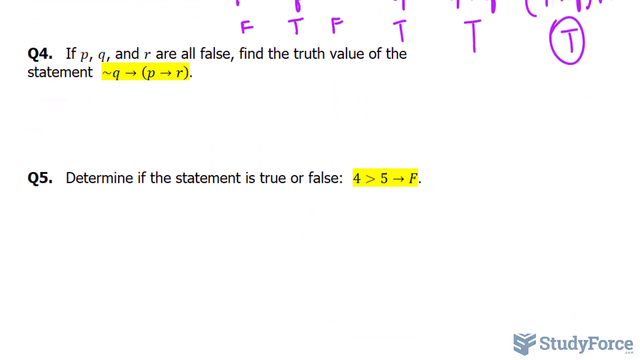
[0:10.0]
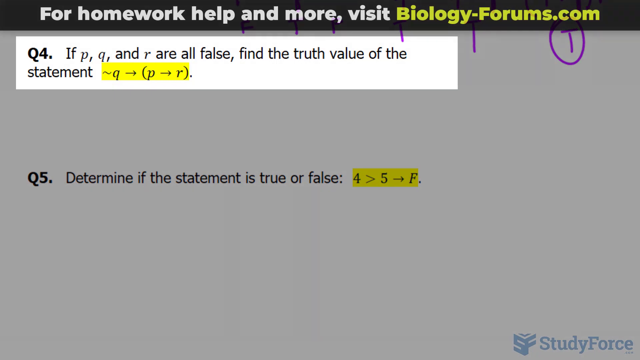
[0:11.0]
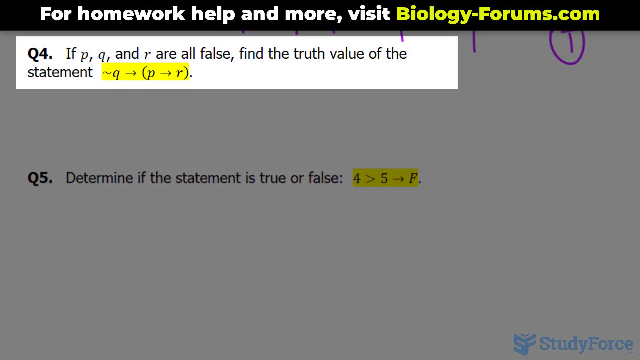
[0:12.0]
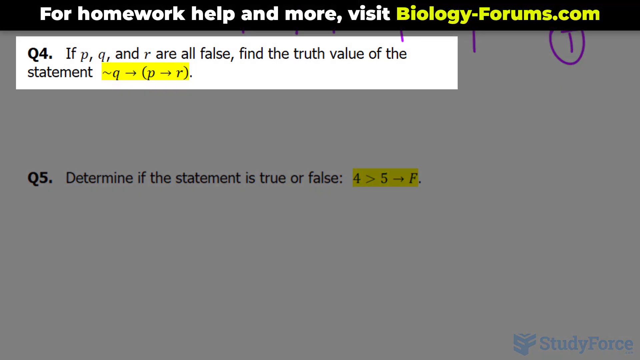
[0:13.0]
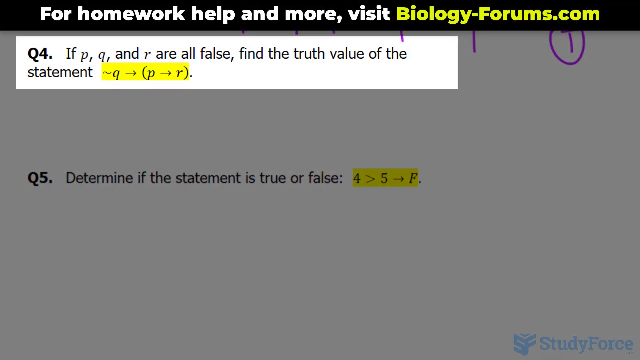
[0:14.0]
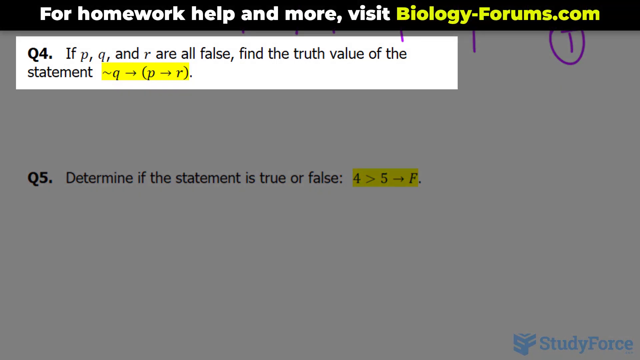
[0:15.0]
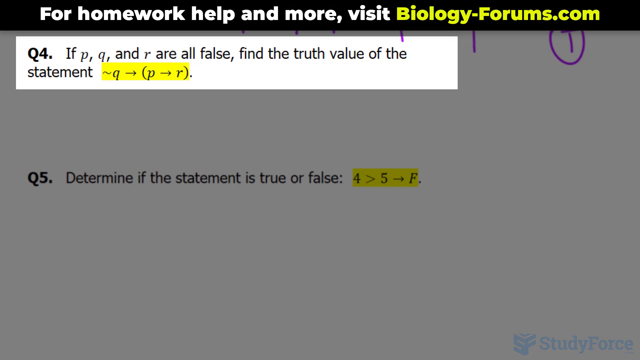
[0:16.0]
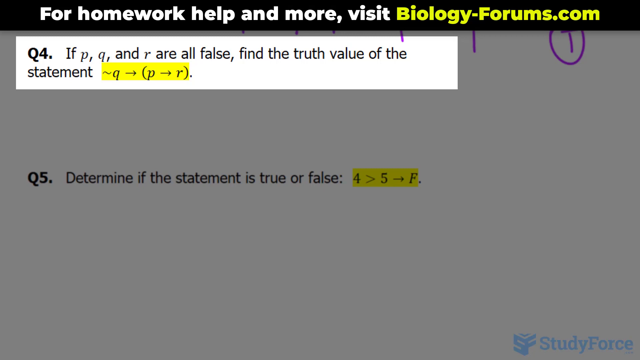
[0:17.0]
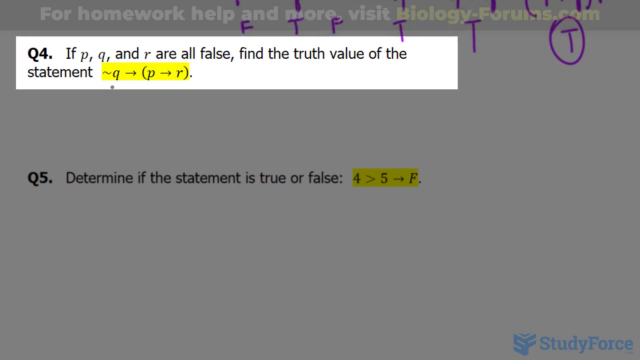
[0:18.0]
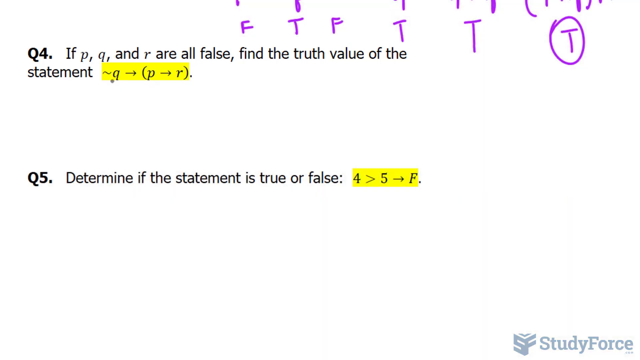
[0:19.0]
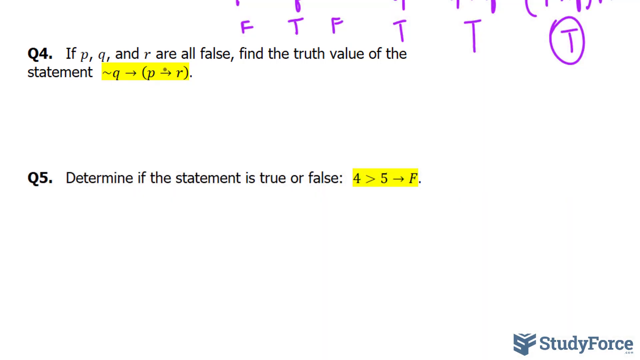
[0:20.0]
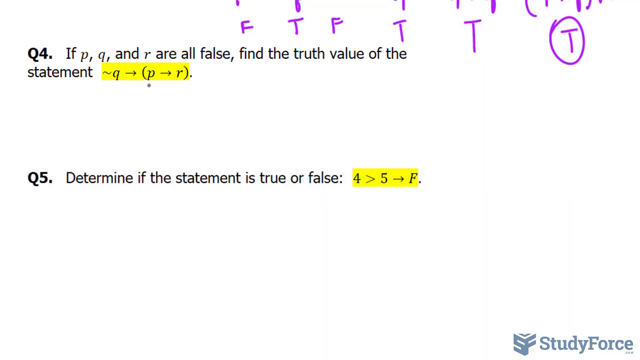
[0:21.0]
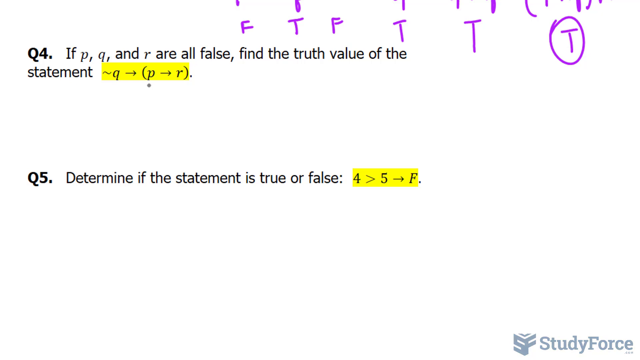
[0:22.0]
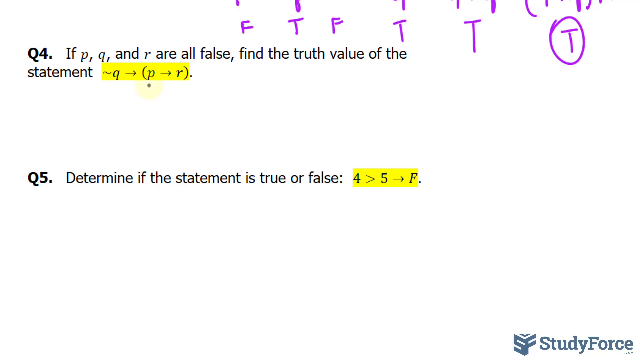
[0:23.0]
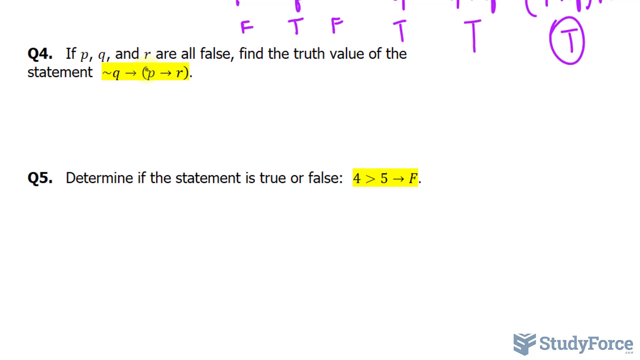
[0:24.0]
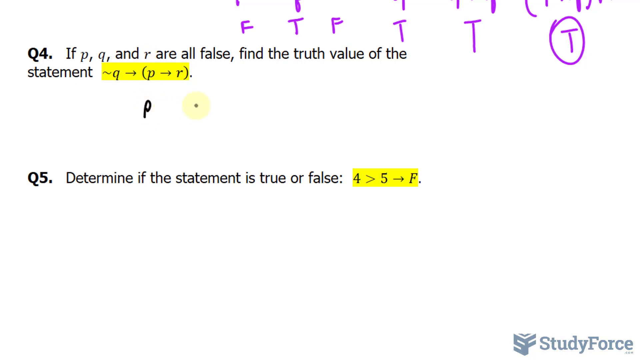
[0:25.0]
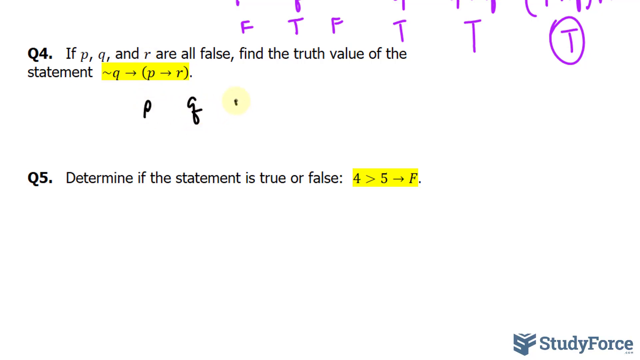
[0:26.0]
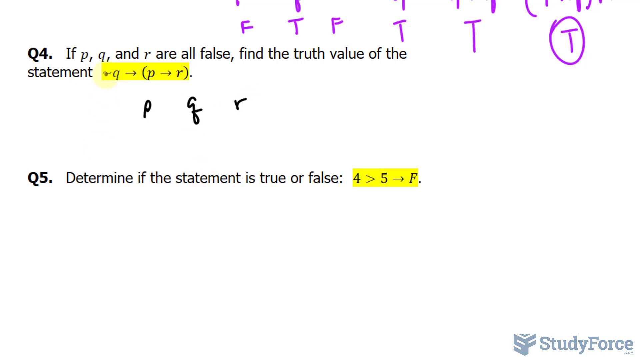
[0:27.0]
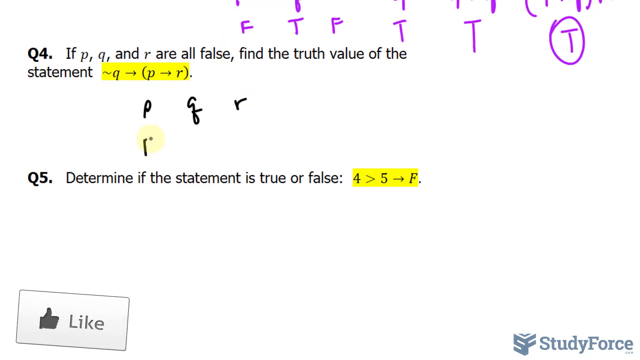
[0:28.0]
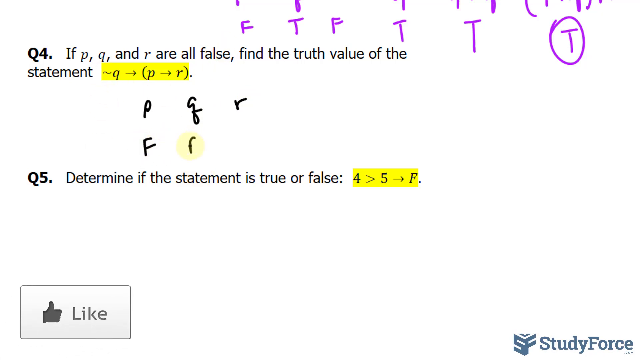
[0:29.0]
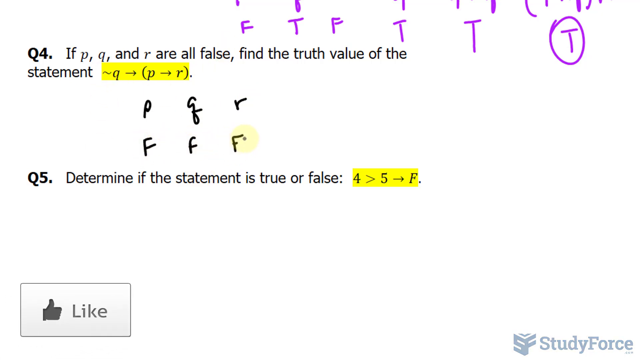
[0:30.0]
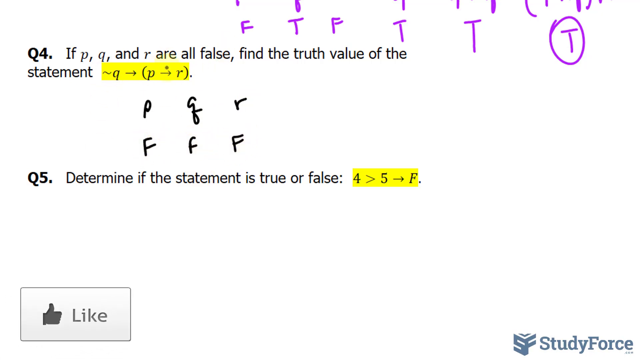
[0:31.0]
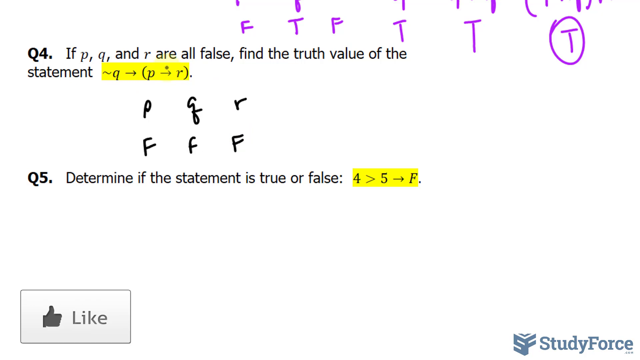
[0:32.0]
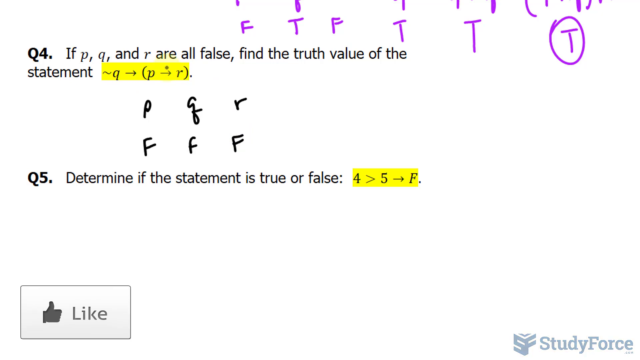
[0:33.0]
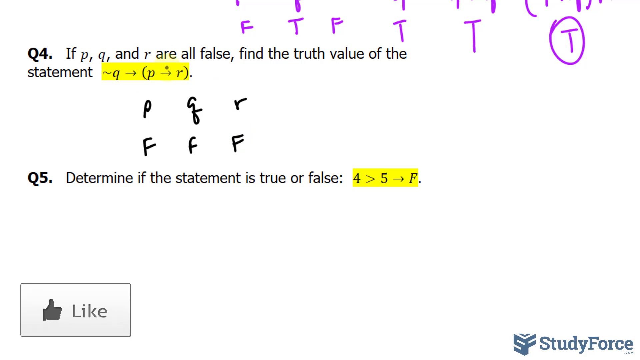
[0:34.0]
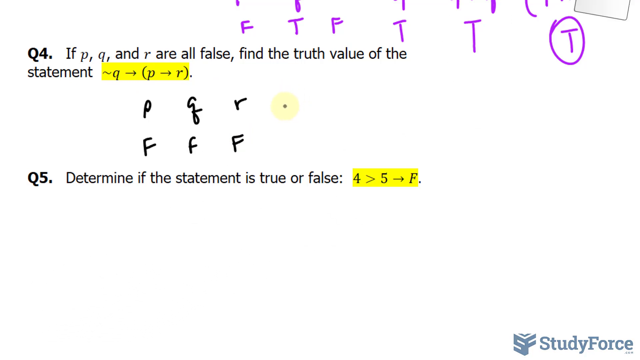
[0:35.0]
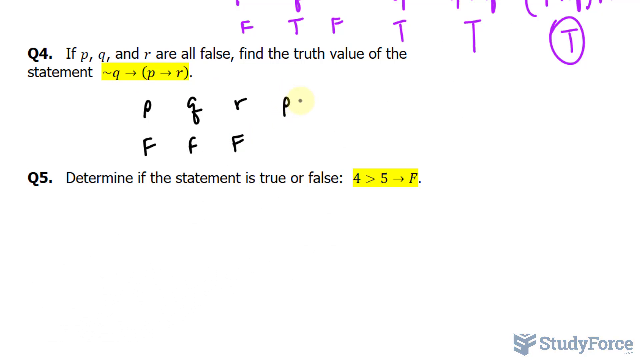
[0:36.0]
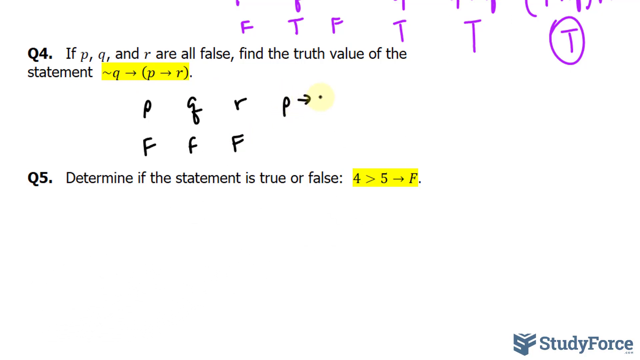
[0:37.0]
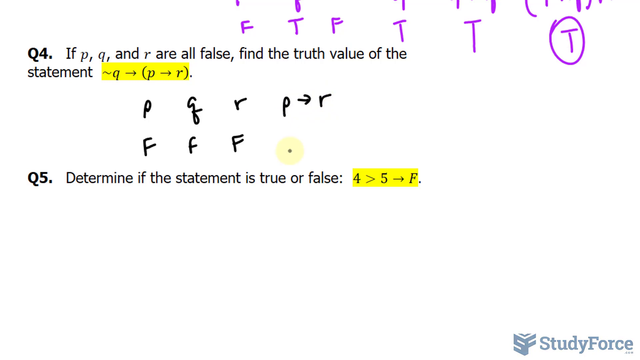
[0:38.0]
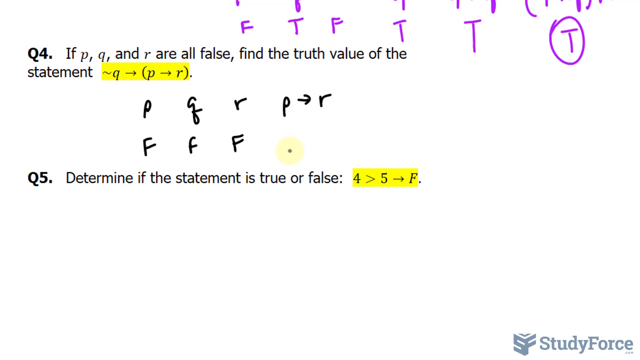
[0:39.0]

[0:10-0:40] At the top of the screen a sentence is visible; some of its words are white, while others are a very light green or yellow, and all of them lie on a black horizontal banner. Immediately below this banner is a sentence written in a black font on a white background, highlighted by a rectangular, lighter-colored portion of the page. A small cursor moves quite fluidly and writes some characters in a black font in the white space between the sentence and the word. Some portions of the black sentences on the page are highlighted with bright yellow rectangles. At the top of the page there are also purple letters, some of which are circled.